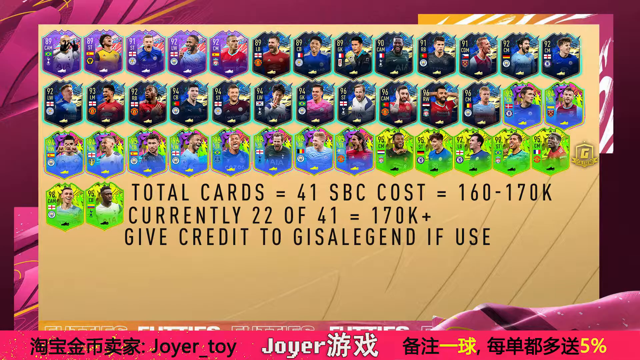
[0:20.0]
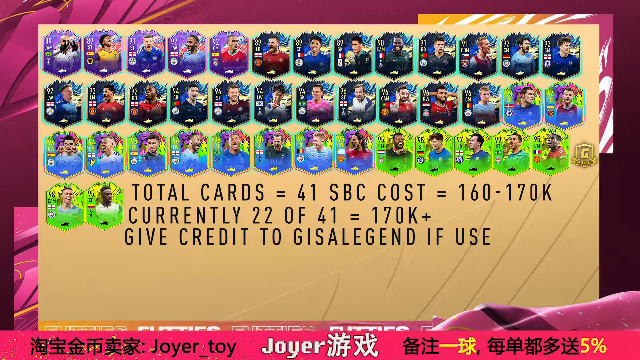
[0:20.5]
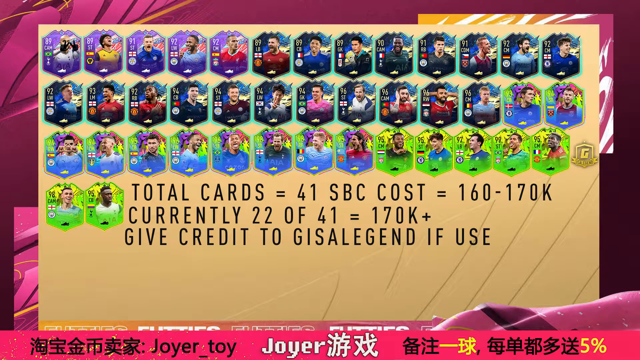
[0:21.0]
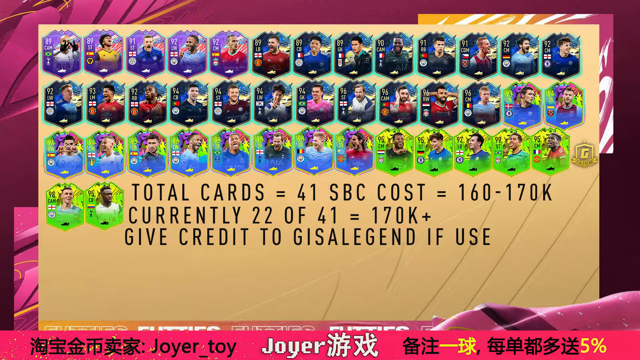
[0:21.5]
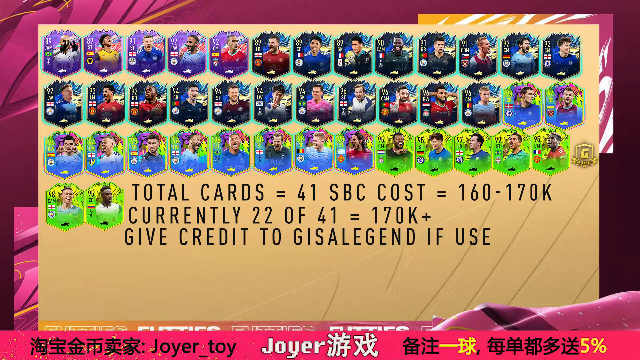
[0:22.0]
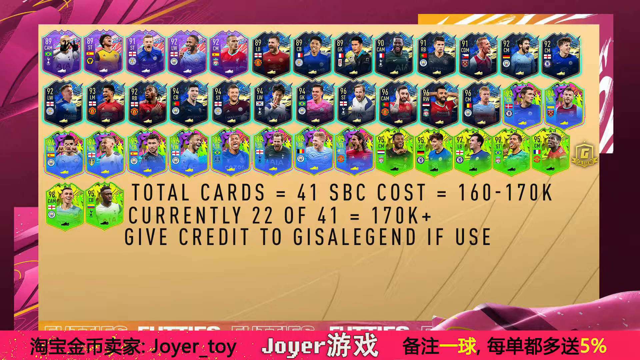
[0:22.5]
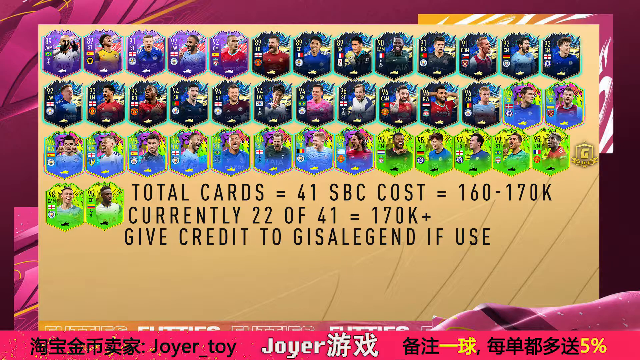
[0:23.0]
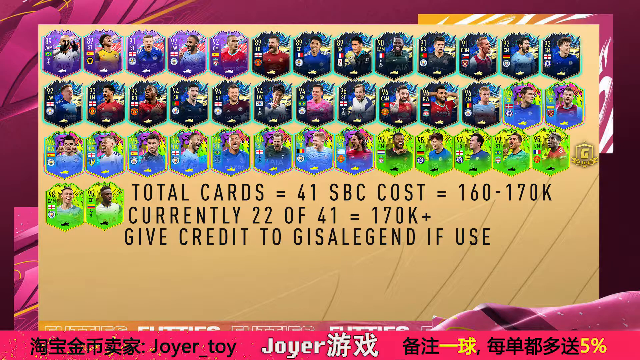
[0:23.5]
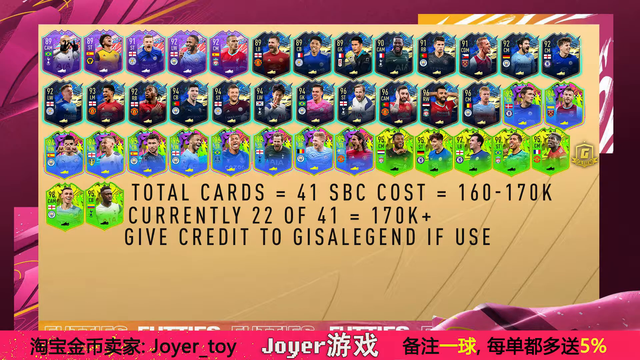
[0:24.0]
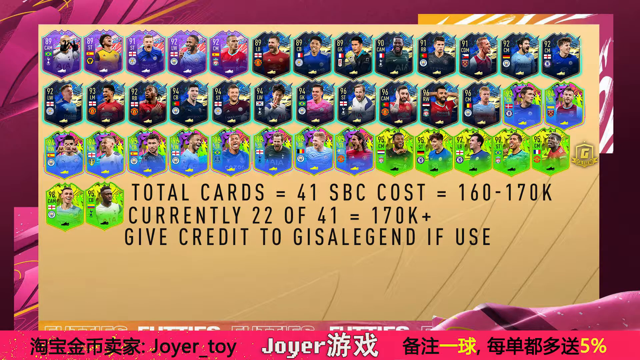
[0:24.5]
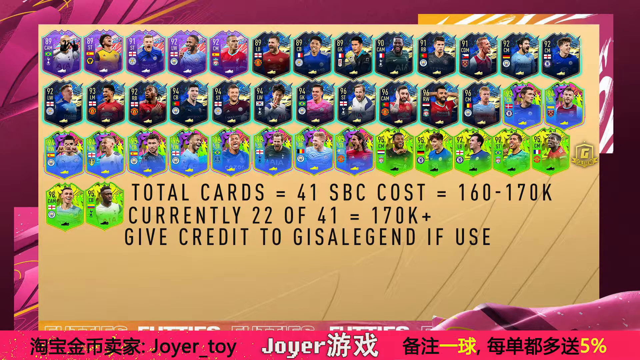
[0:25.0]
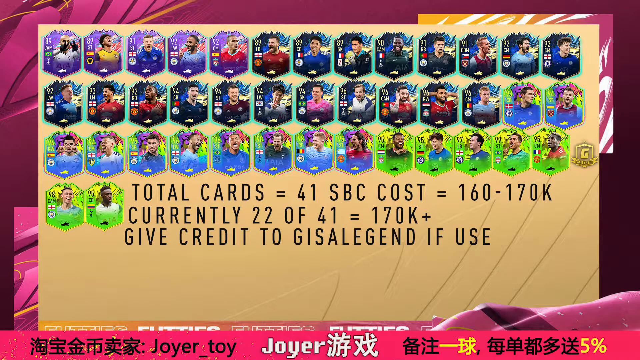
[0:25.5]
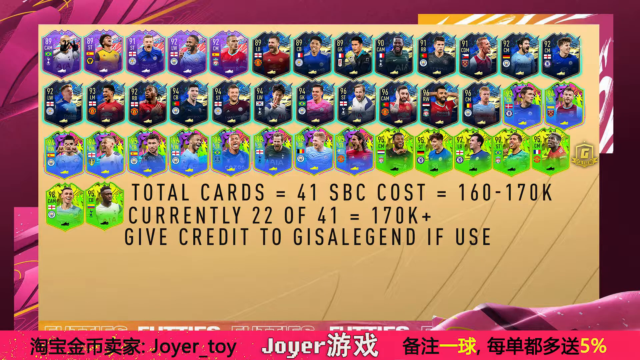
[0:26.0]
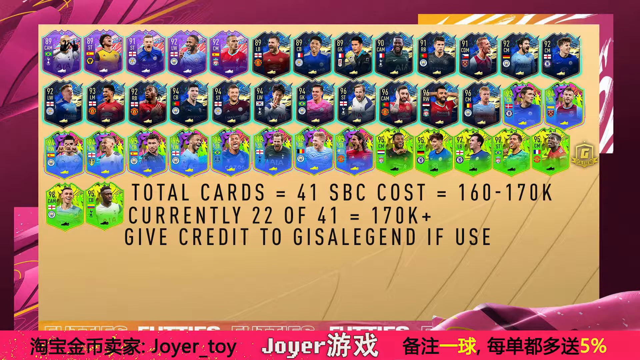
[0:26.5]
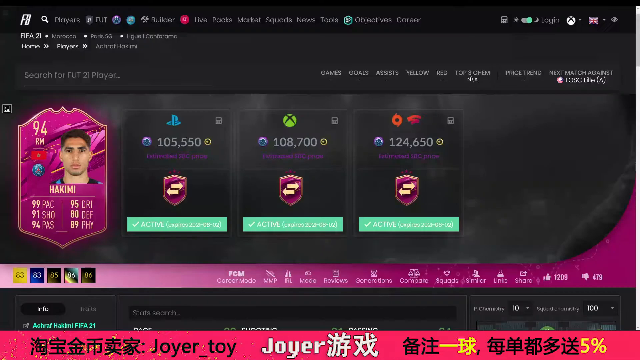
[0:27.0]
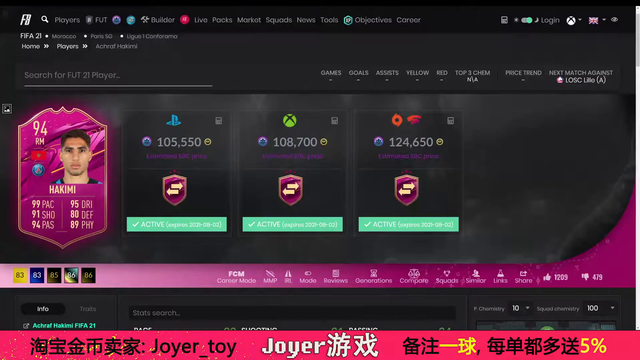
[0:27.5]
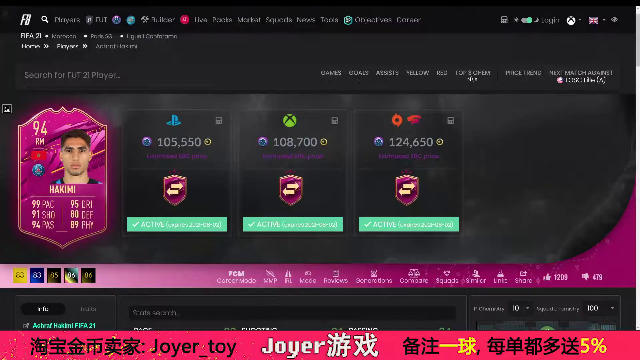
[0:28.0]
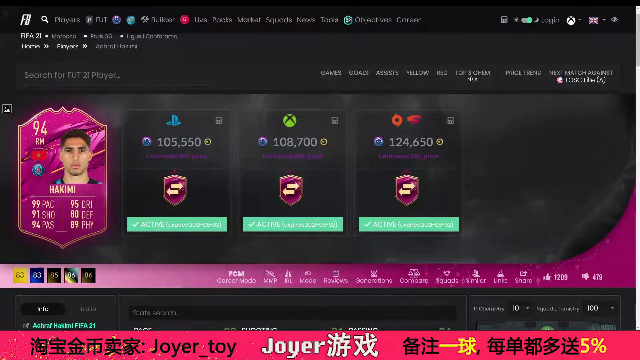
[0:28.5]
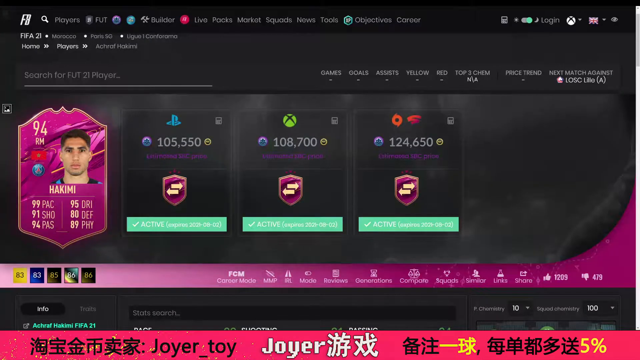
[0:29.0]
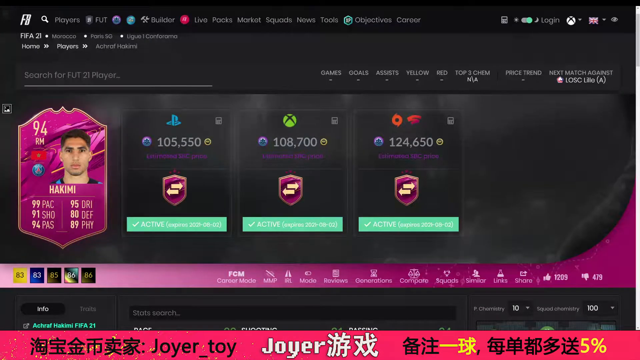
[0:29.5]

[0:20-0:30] A yellow rectangle holds pictures of what looks to be 41 players, each with a different rating. They appear to be from different countries, since each has a flag on it. Each person is shown in an oval shape that looks more like a crest. Text reads "total cards equals 41 SBC cost equals 160 to 170 K. Currently 22 of 41 equals 170 K plus. Give credit to Gissa legend if used." The video stays on this page and then cuts to the FIFA 21 video game. In the upper right-hand corner are a British flag and an Xbox, apparently indicating someone playing the game on Xbox. Hakimi, a 94 RM, is still shown, and the screen has different symbols for PlayStation or Xbox, possibly boxes for how to buy, though this is unclear.